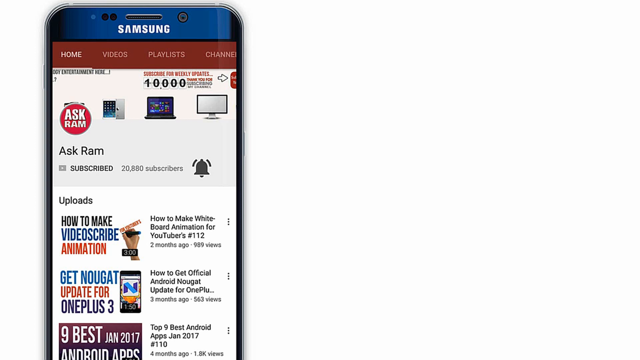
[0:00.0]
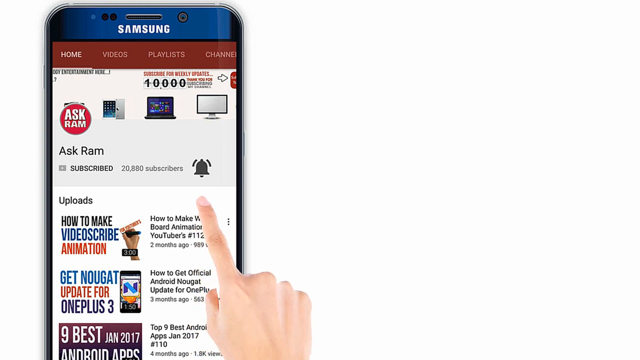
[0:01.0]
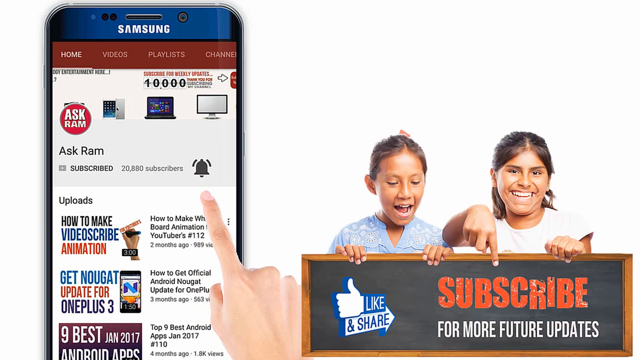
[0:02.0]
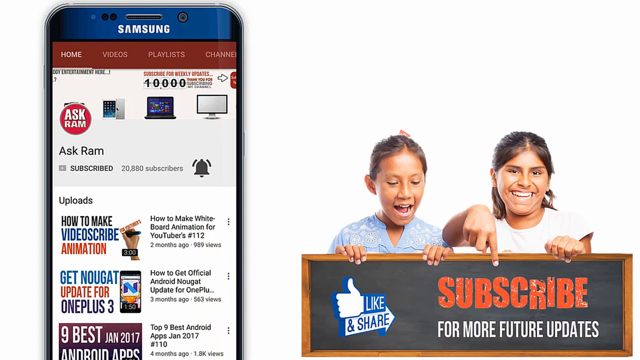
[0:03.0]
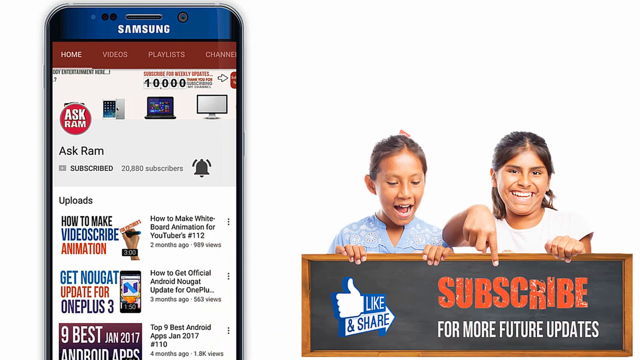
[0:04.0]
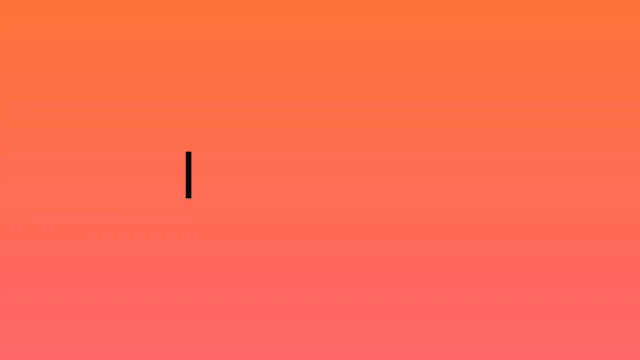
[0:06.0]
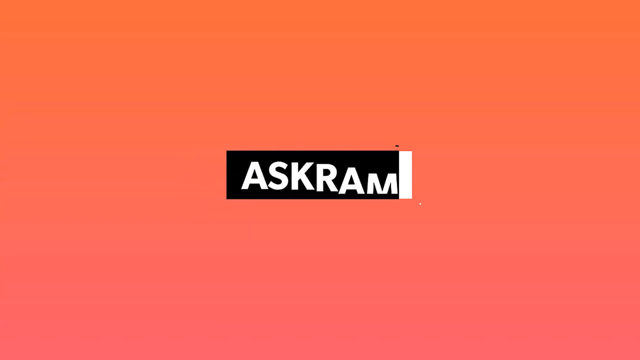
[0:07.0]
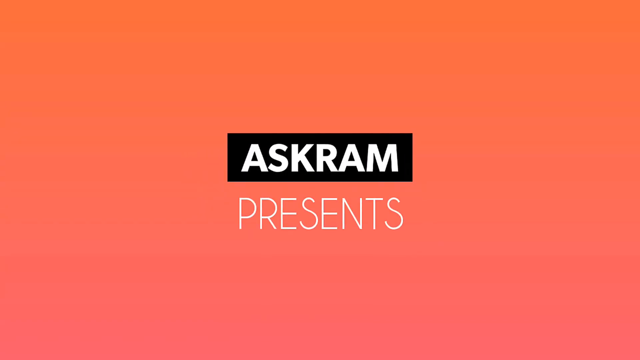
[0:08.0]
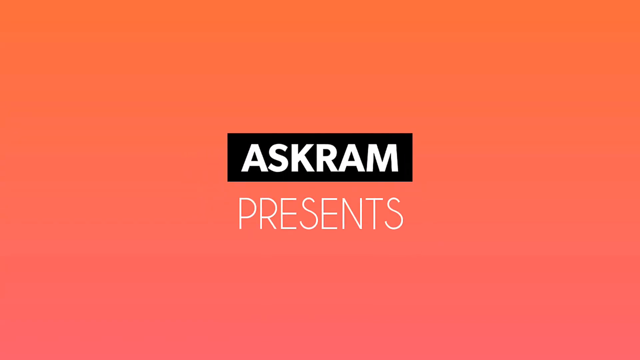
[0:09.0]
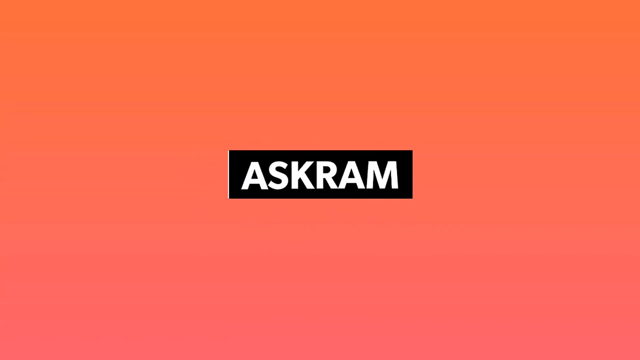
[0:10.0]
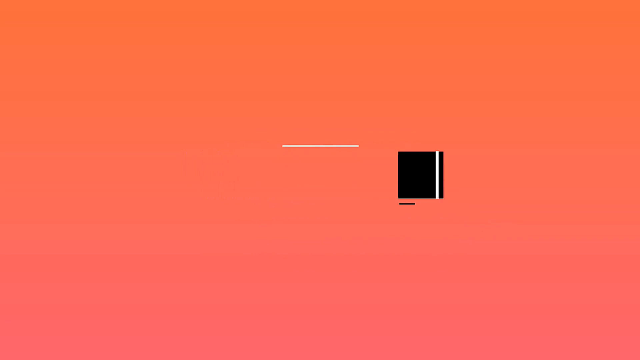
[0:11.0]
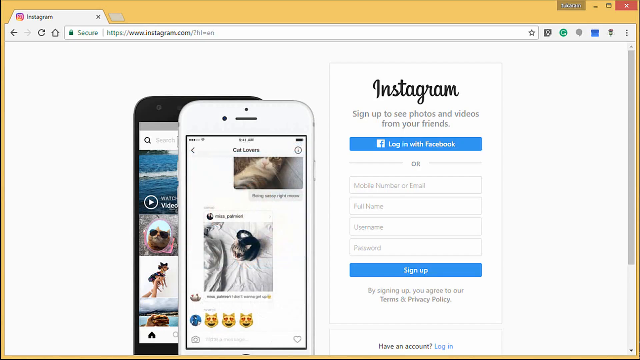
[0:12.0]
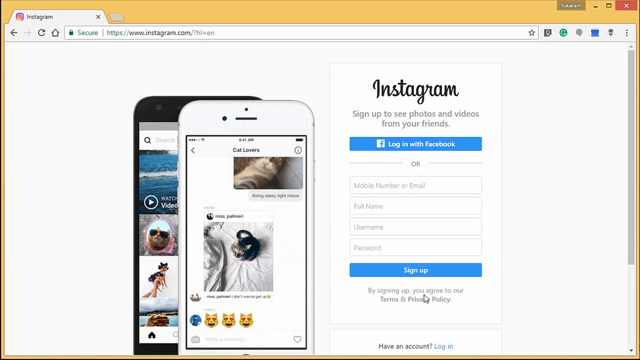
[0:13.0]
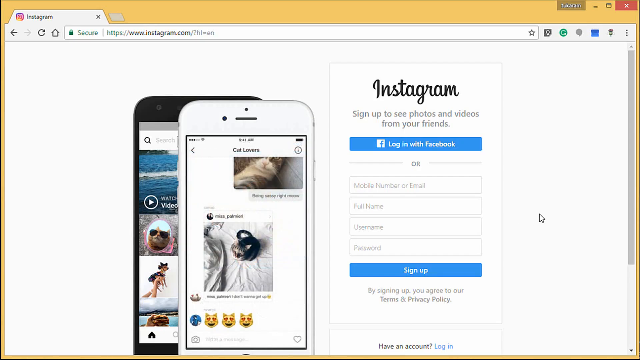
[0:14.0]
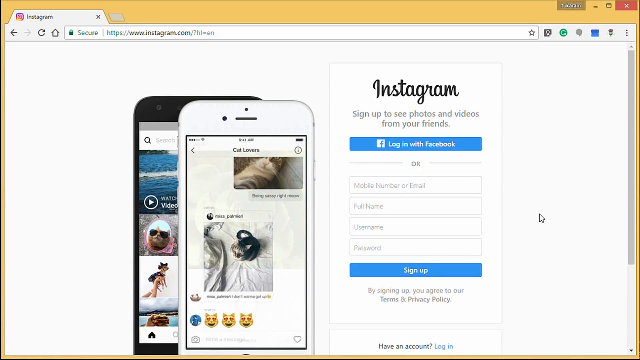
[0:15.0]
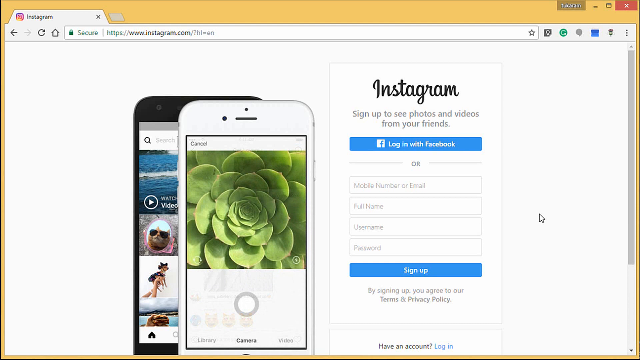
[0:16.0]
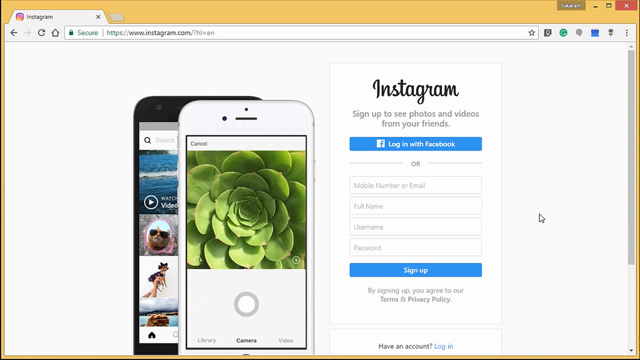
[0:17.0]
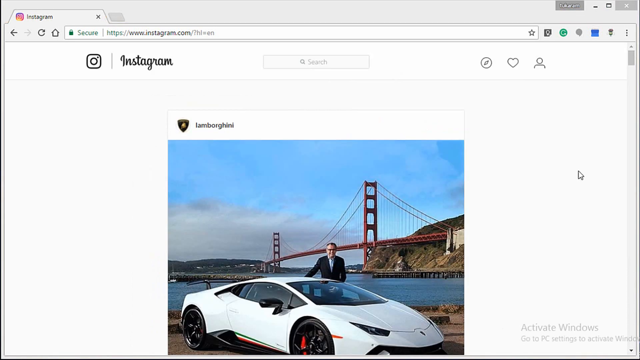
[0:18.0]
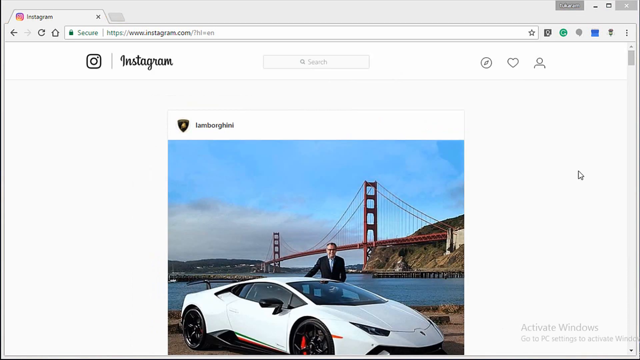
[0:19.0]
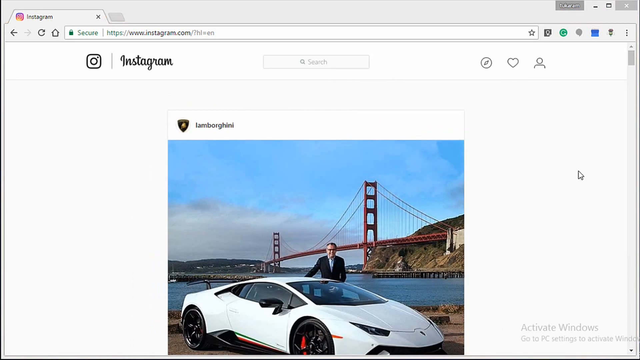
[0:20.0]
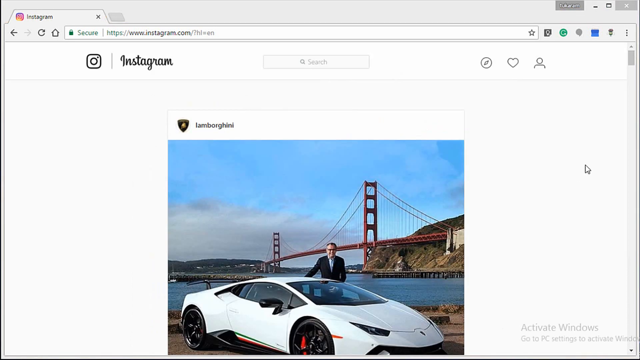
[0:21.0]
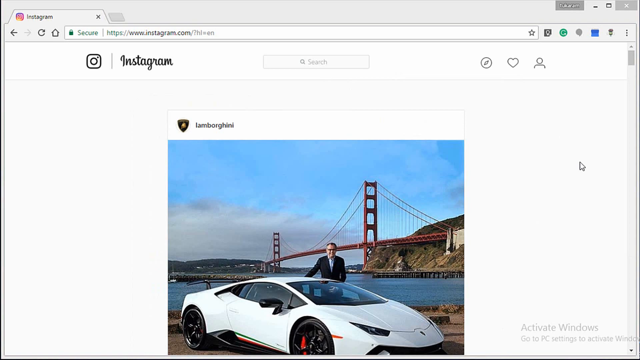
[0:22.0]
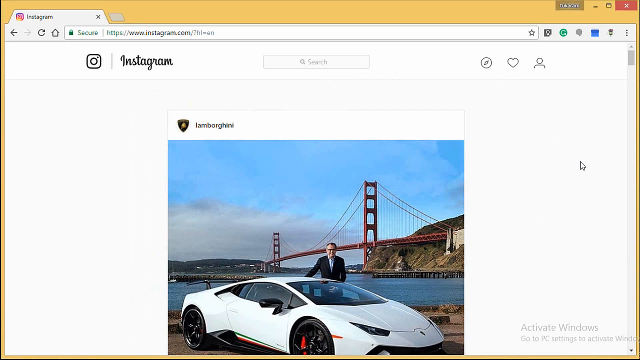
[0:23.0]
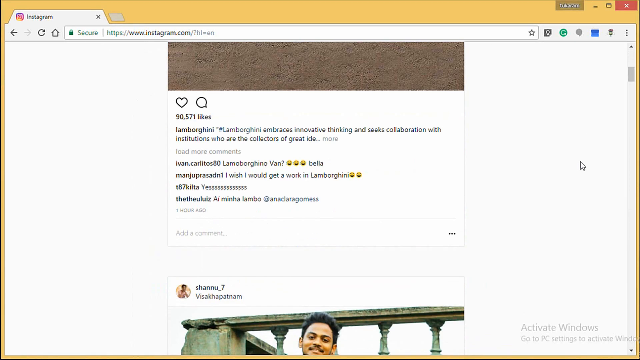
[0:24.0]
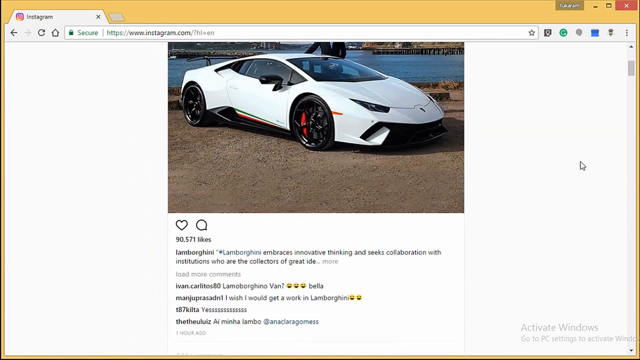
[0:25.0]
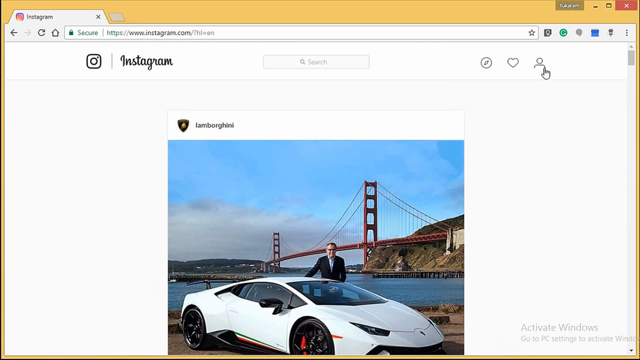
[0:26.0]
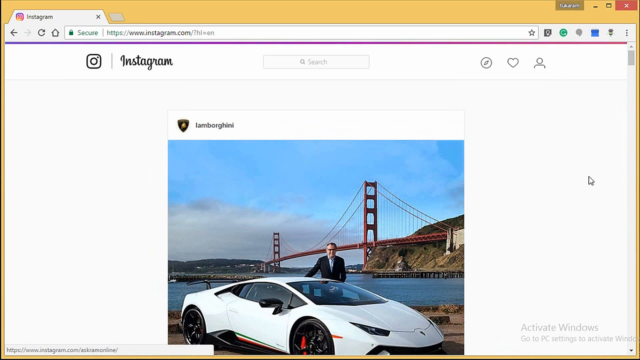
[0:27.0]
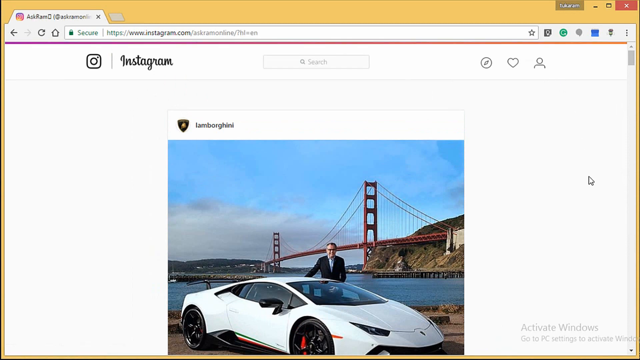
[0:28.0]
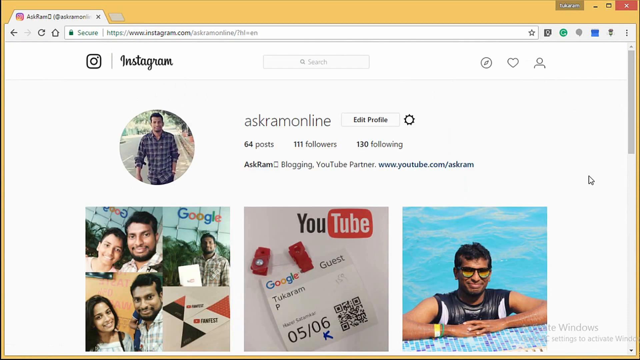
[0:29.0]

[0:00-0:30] A person scrolls on his phone. First the subscribe button is shown, then the person's username on the Instagram platform, Askram. The first image is a green flower, followed by a very nice car with a middle-aged man standing close to it. In the background there is a long bridge and what appears to be a dam. Next come another person and another bridge, then the car again. The person is showing the pictures uploaded to the Instagram account. Images of different people appear briefly before the view returns to the white car.